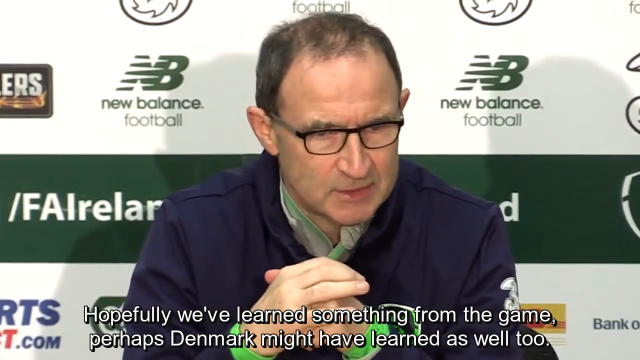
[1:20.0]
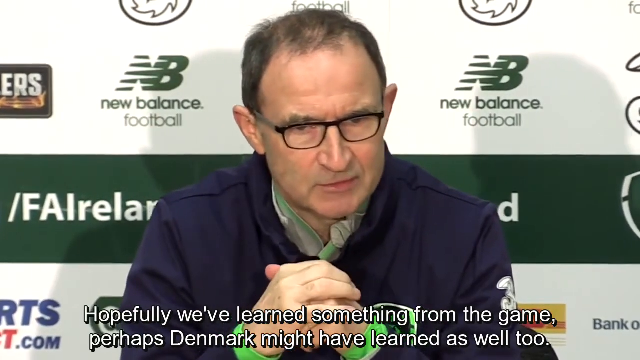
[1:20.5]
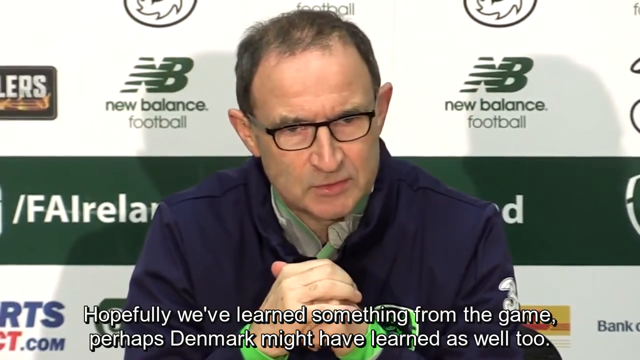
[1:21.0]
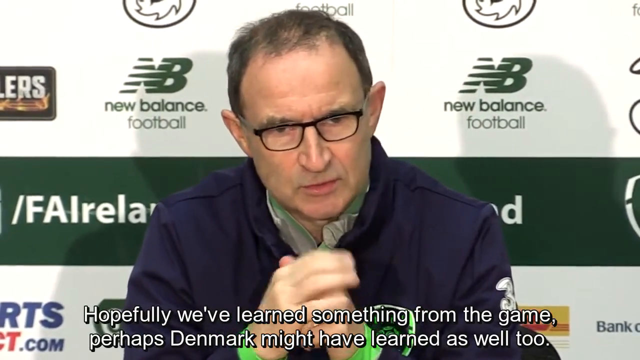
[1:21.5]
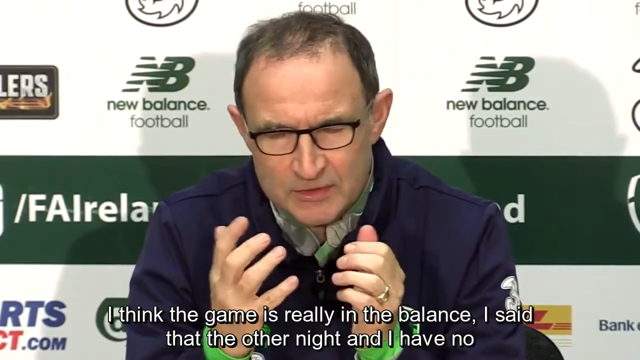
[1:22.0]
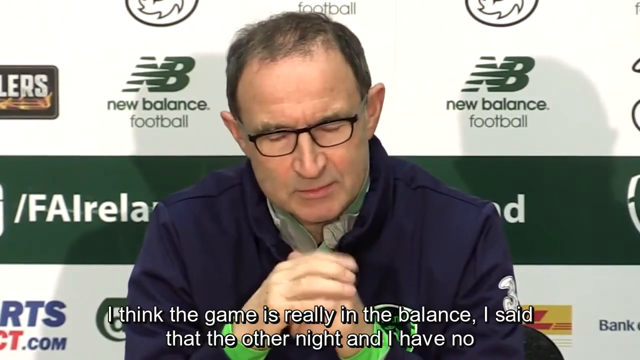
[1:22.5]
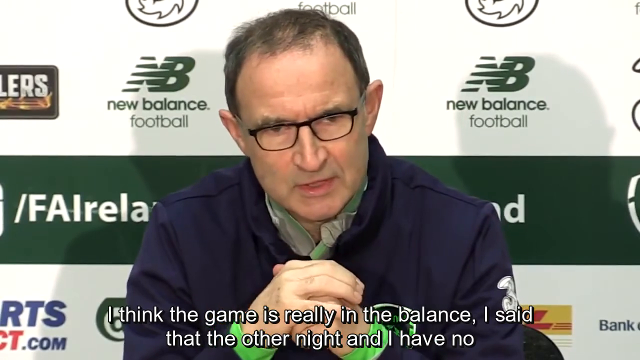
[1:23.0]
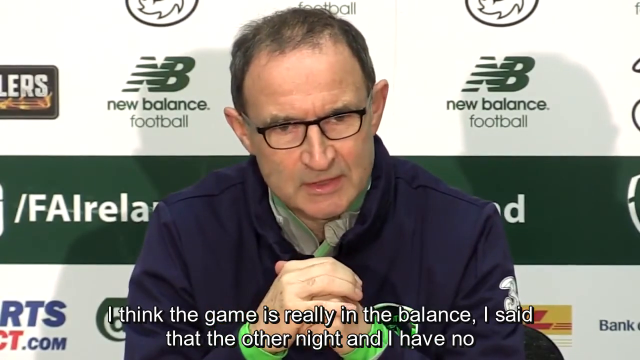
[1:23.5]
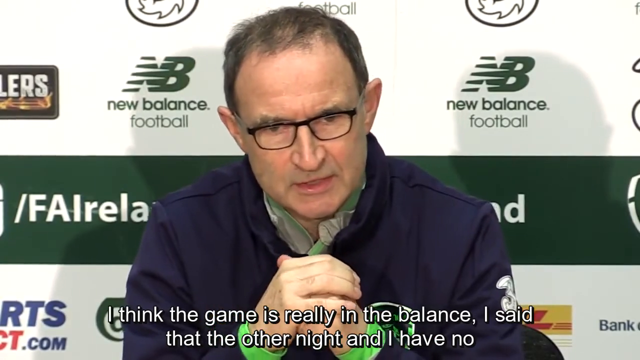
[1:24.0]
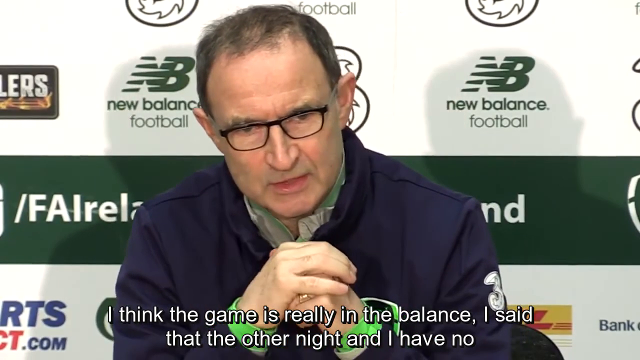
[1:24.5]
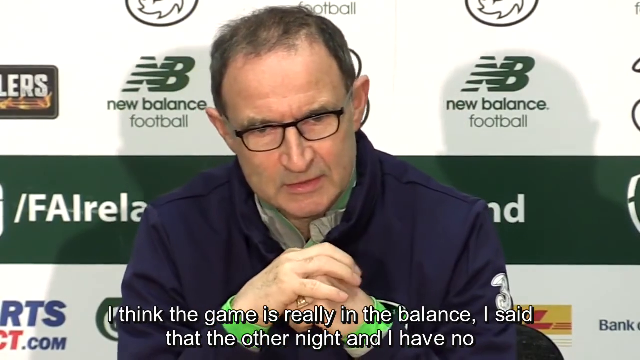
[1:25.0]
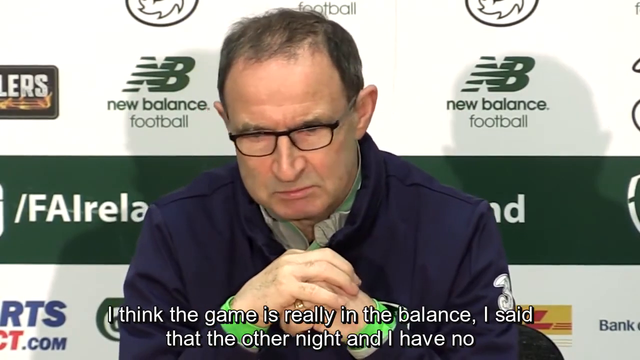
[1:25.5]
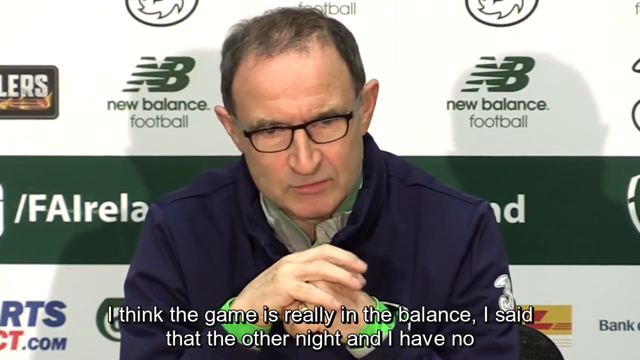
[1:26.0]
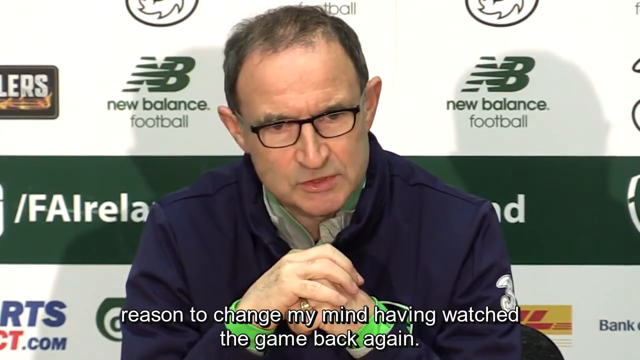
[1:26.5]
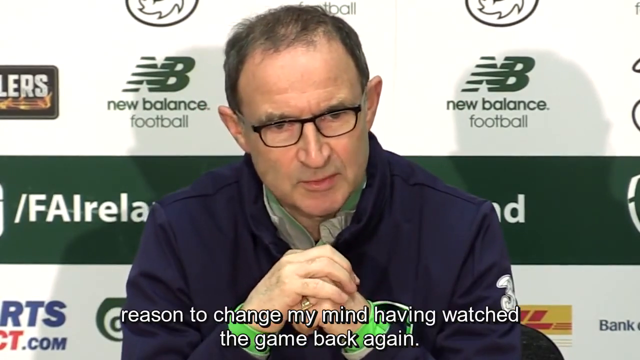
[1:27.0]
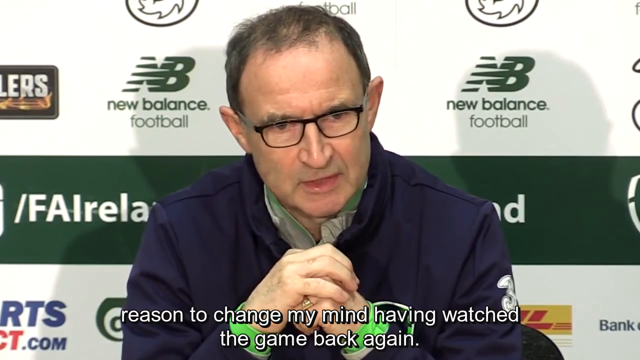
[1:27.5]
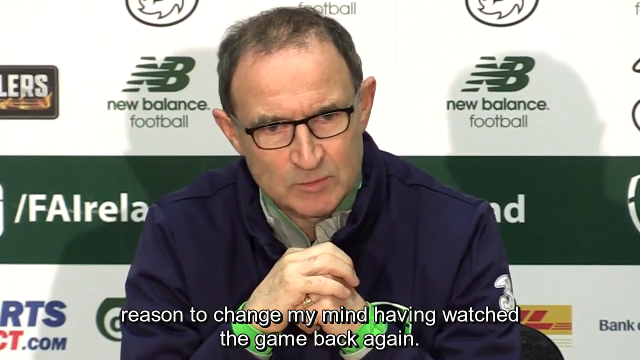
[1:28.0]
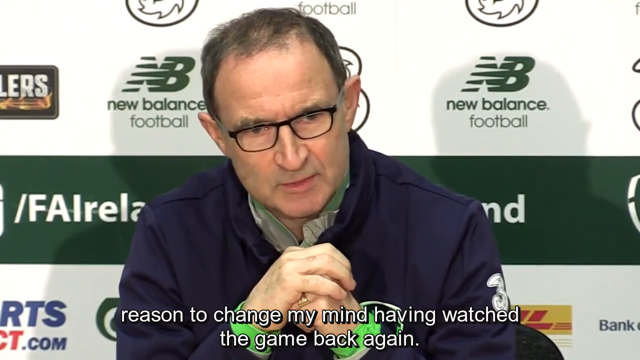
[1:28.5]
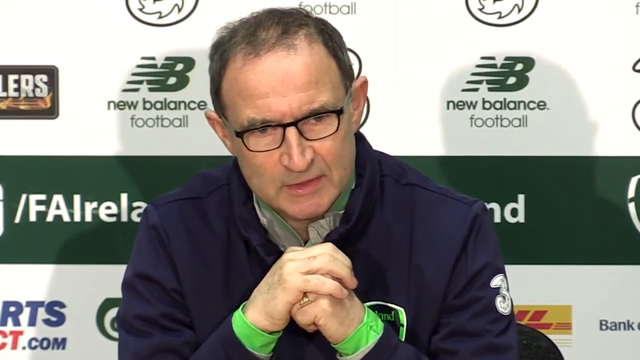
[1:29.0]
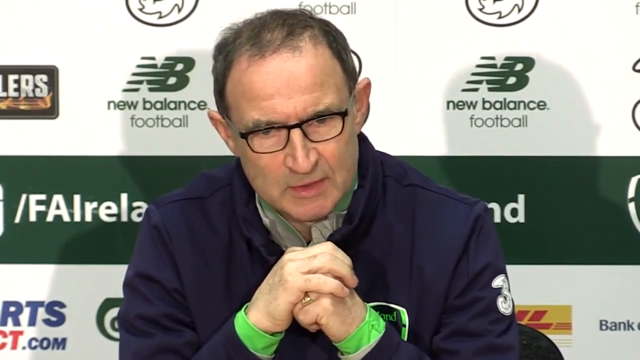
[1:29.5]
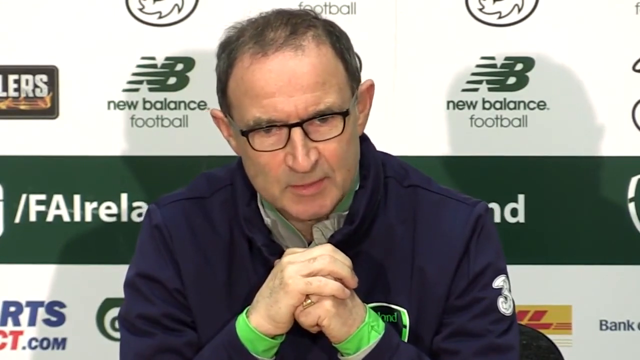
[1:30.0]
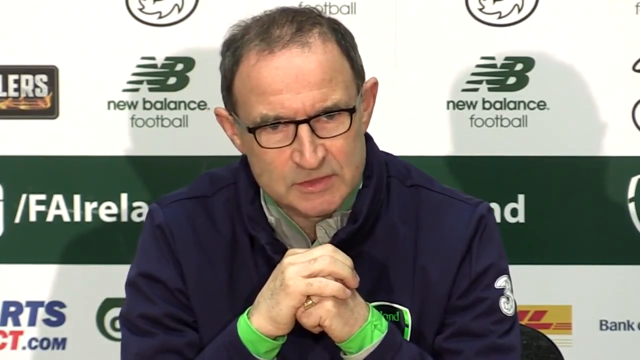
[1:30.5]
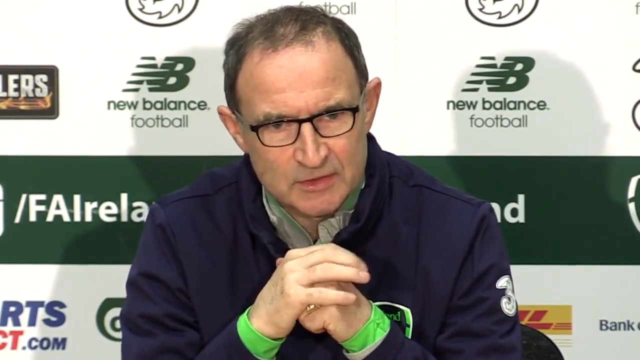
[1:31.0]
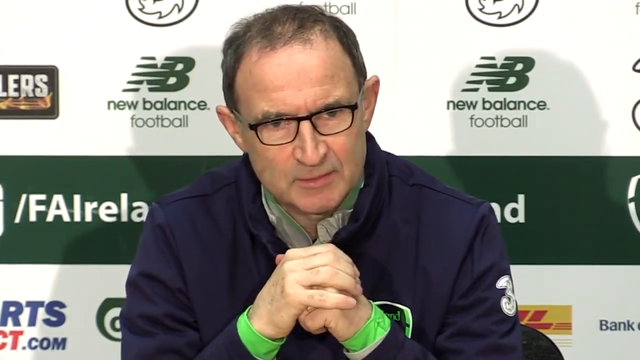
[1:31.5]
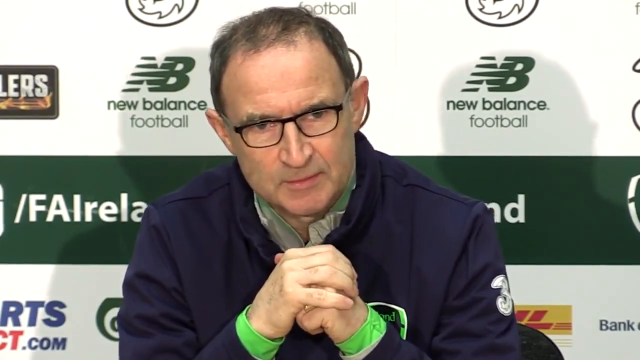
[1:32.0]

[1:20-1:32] One man is talking. He has black glasses, short dark hair that appears to be thinning, and no facial hair. The background behind him is mostly white with a little green and many different advertisements, including New Balance Football and Rustlers. His hands are clasped together, and a gold ring is visible on his finger. He appears to be talking to interviewers about a sports game and his plans for it, as reporters ask him questions and he answers them in turn.